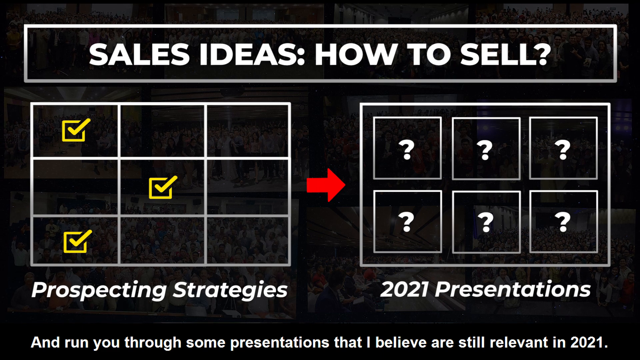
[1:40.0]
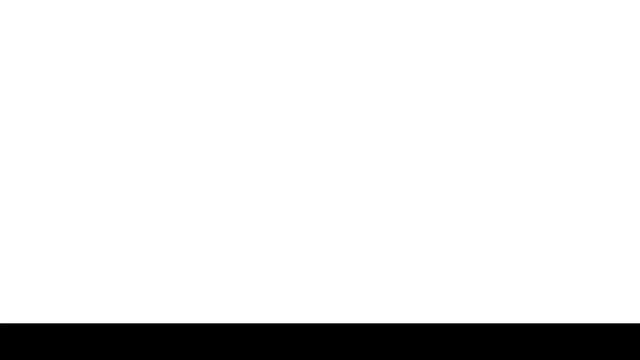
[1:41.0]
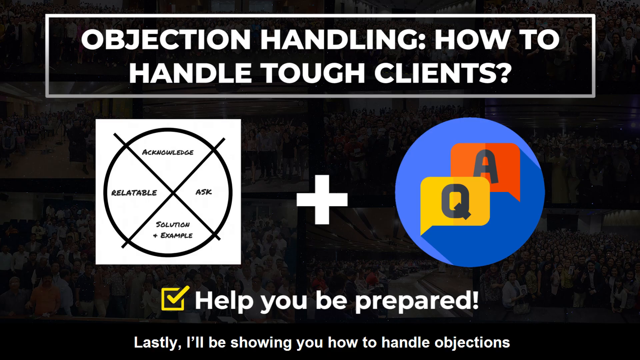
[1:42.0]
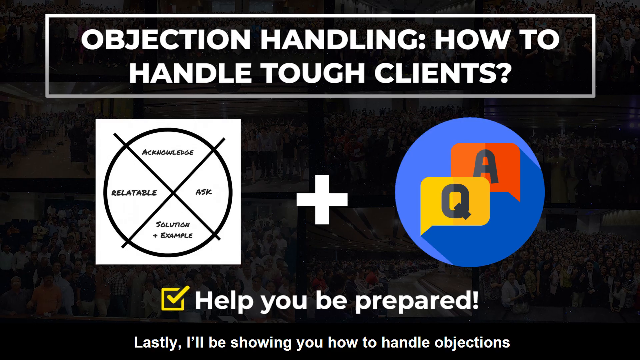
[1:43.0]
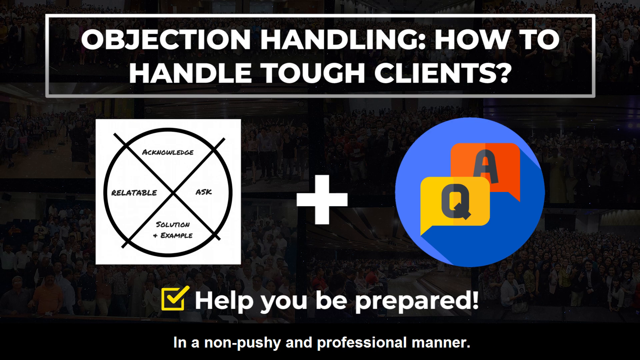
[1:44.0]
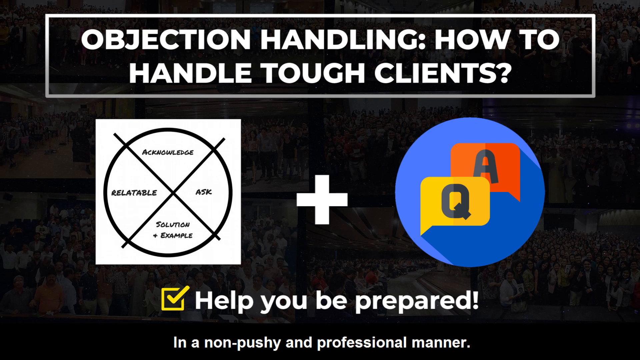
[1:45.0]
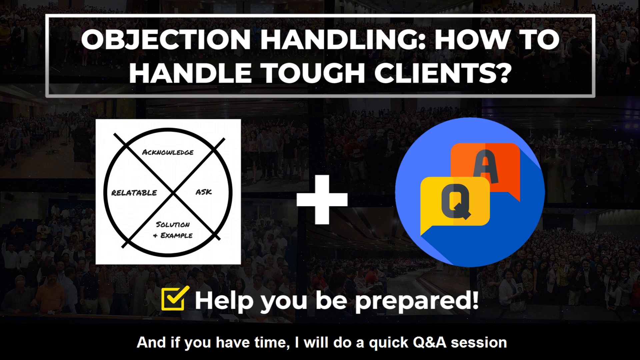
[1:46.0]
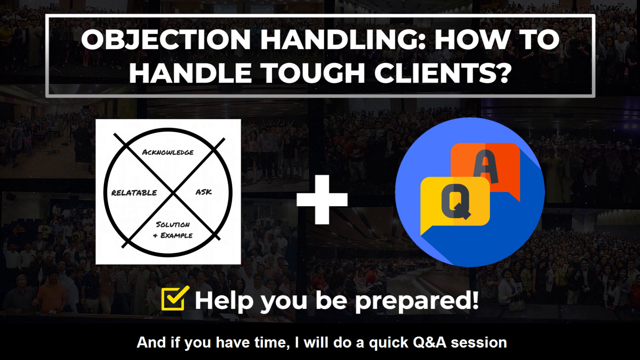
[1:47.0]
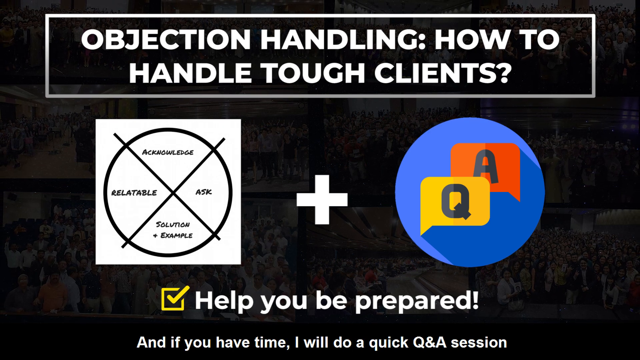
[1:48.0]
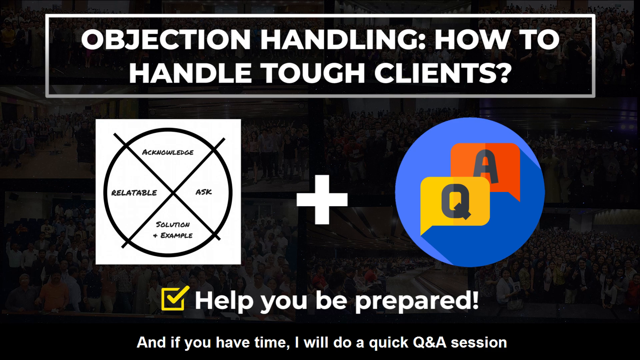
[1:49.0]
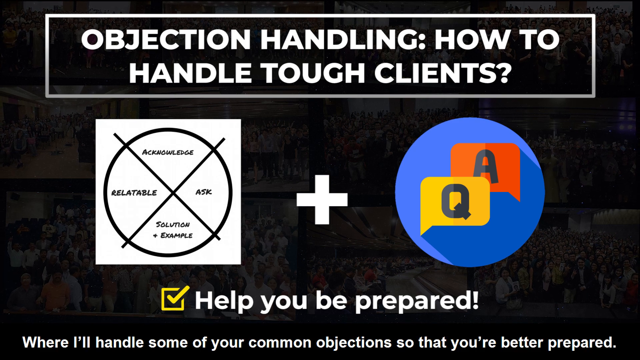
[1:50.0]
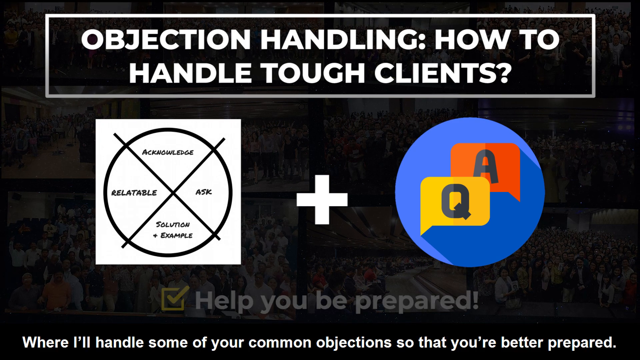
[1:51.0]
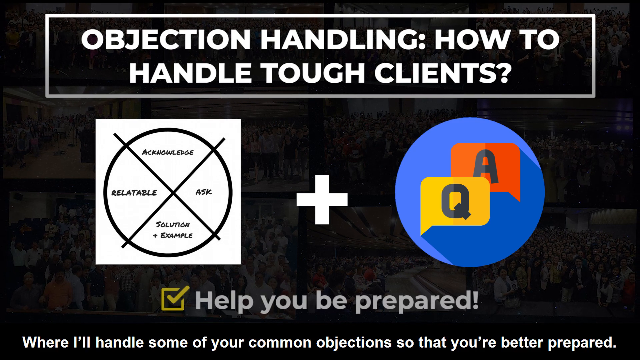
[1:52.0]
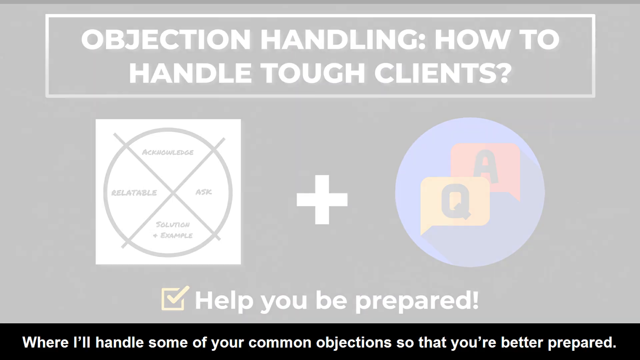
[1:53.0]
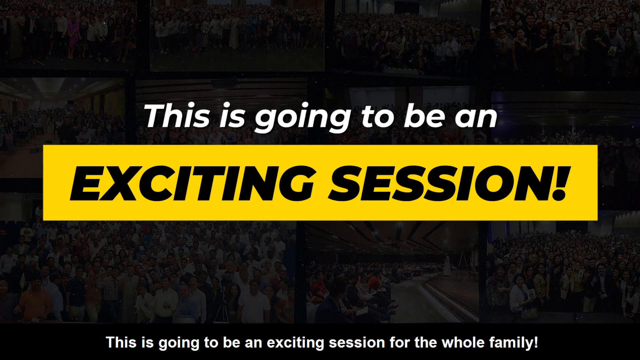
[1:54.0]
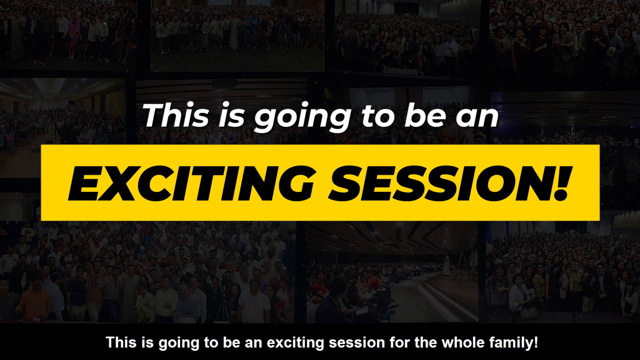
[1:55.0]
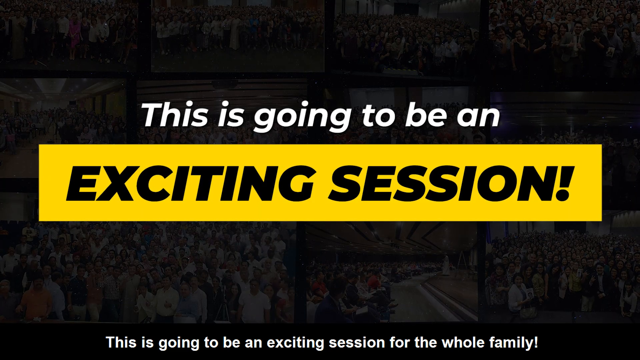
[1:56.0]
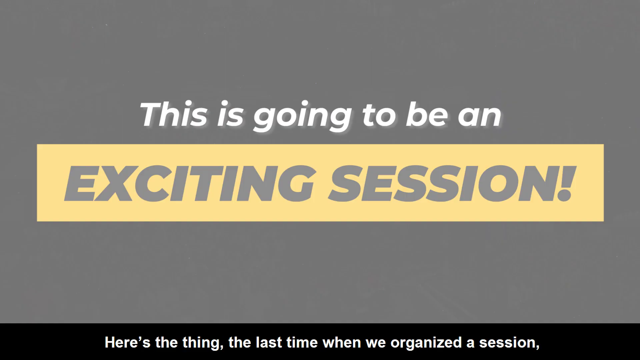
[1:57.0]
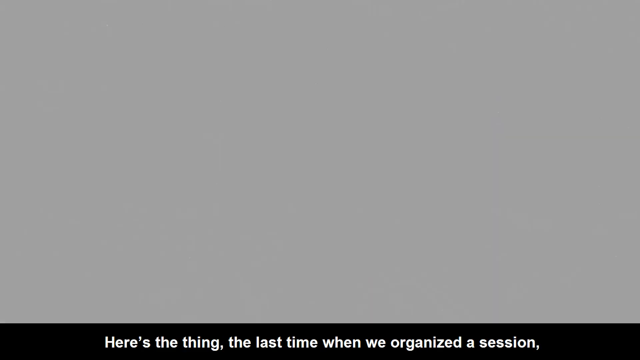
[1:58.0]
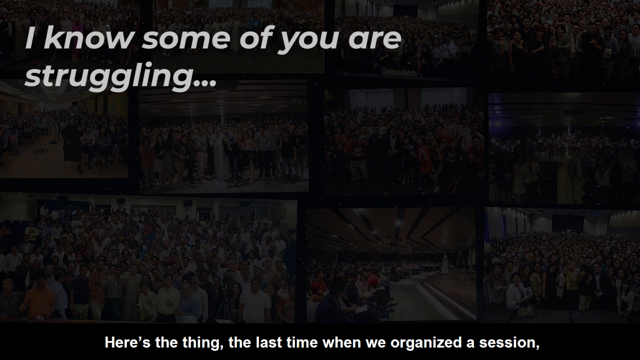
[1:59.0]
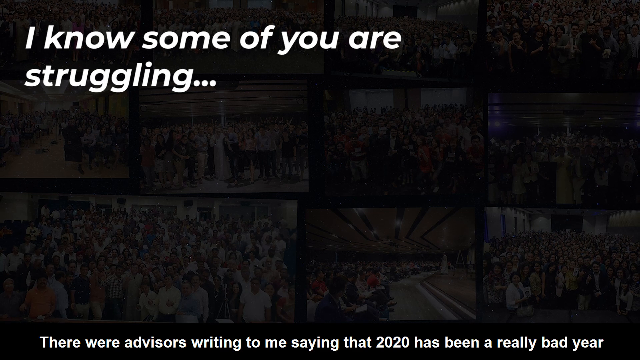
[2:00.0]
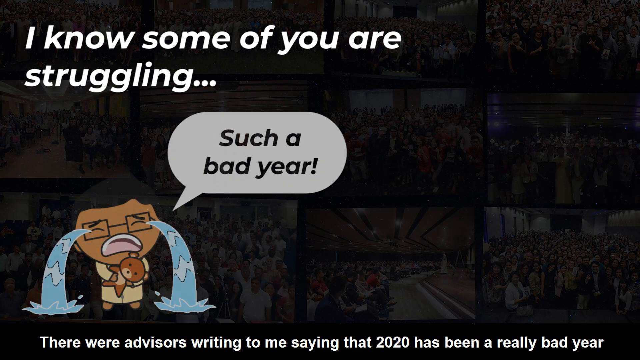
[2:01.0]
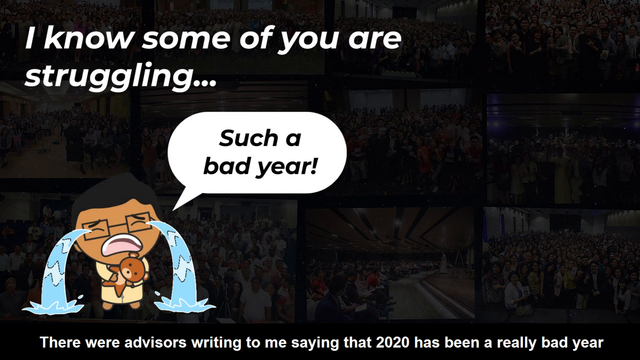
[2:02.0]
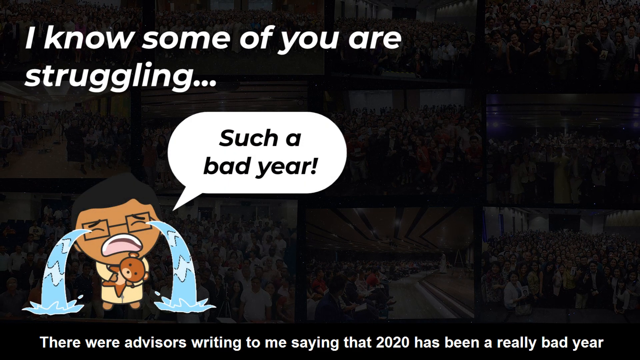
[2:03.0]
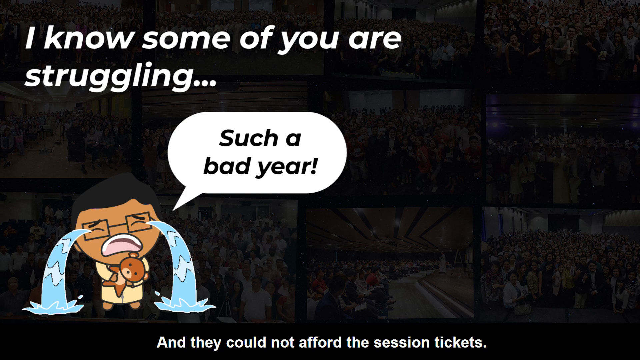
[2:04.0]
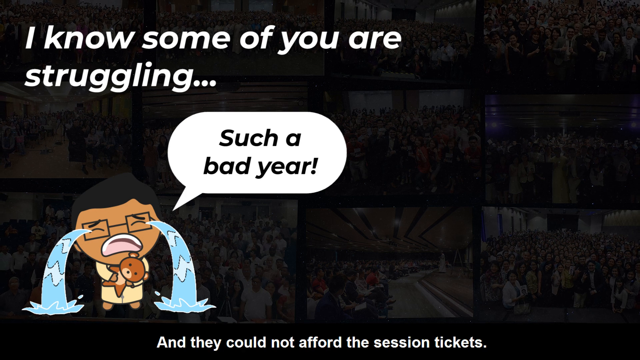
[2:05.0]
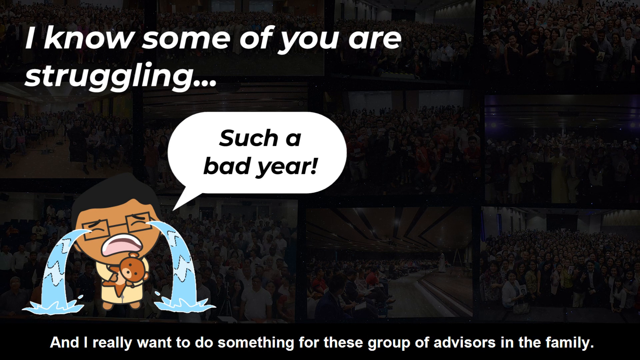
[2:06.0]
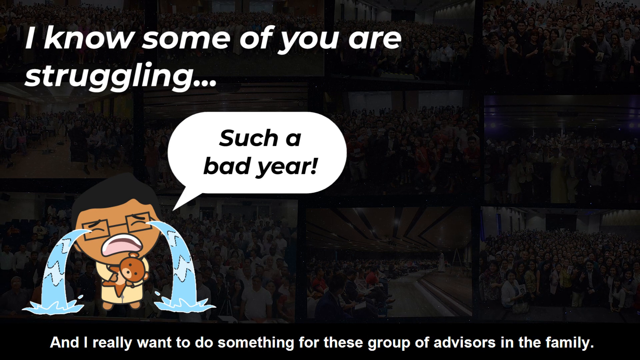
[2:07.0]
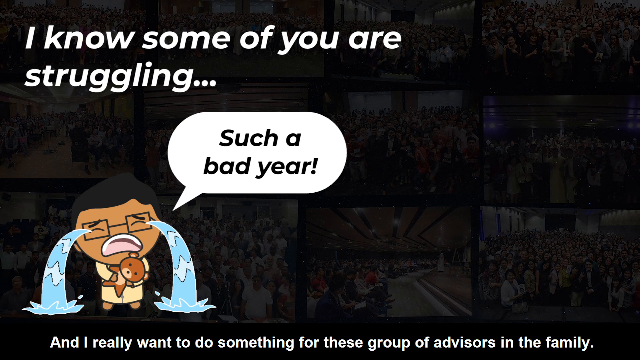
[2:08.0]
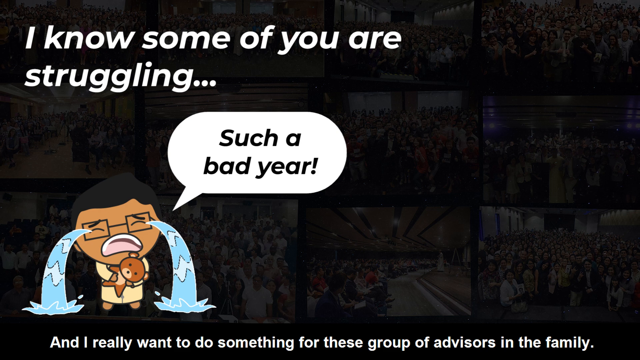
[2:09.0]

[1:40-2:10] The two grids appear under the heading "sales ideas, how to sell": the first grid has three check marks and the second has six question marks. The next screen reads "objection handling, how to handle tough clients." Beneath it is a box with a circle and an X through it, then a plus sign, then a blue circle with "Q&A" inside. A checkbox underneath reads "help you be prepared. And if you have time, I will do a quick Q&A session." The "help you be prepared" text pulses. A new screen reads "this is going to be an exciting session," with "exciting session" written in a long yellow rectangle. Next, a black screen shows an image of a person crying and holding a teddy bear, with a thought bubble that says "such a bad year" and the text "I know some of you are struggling" at the top.